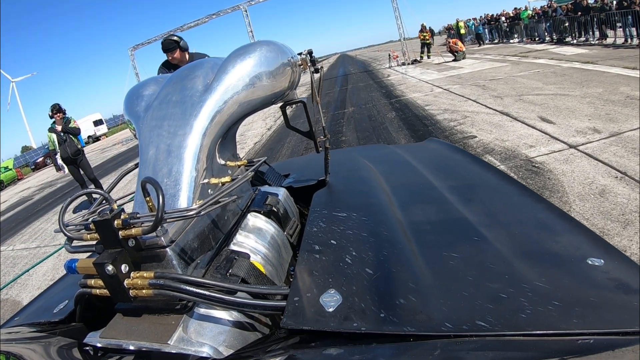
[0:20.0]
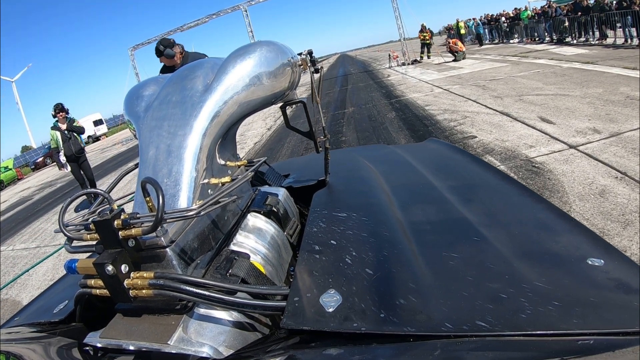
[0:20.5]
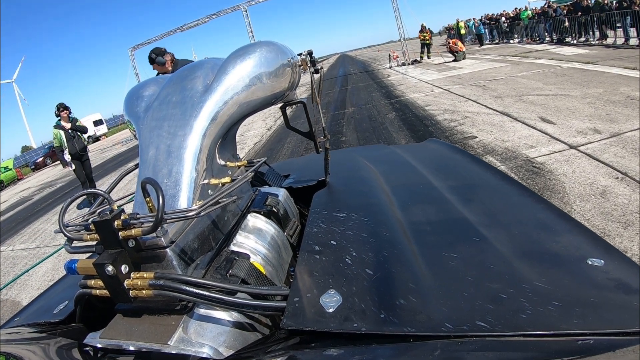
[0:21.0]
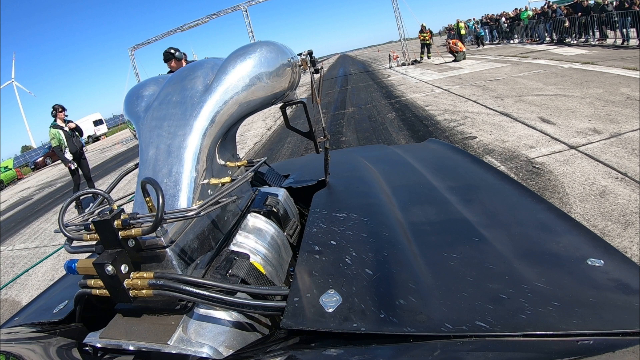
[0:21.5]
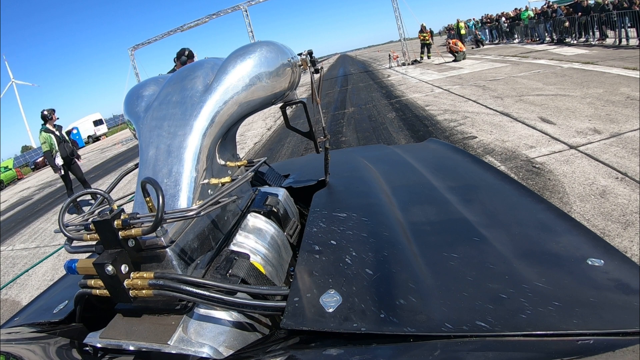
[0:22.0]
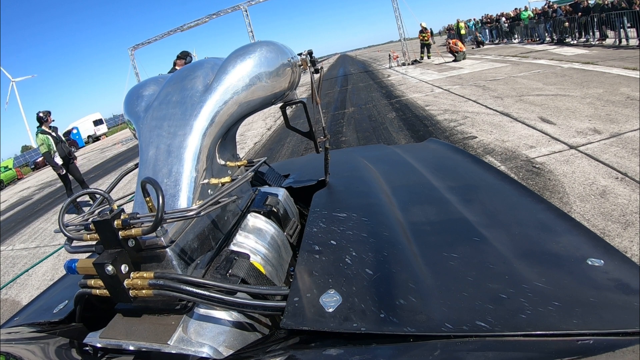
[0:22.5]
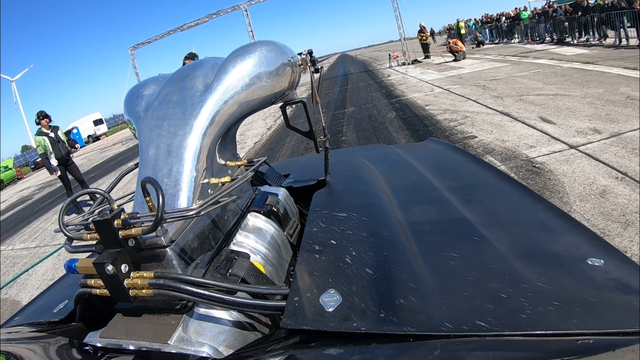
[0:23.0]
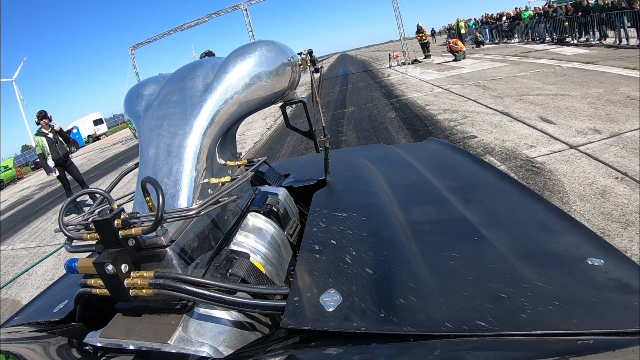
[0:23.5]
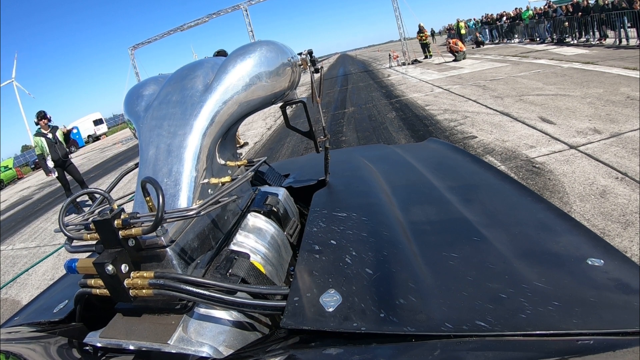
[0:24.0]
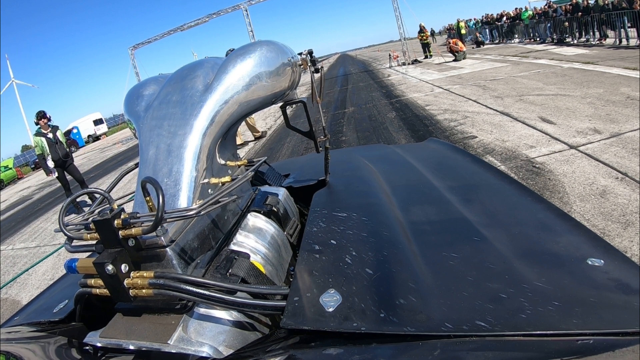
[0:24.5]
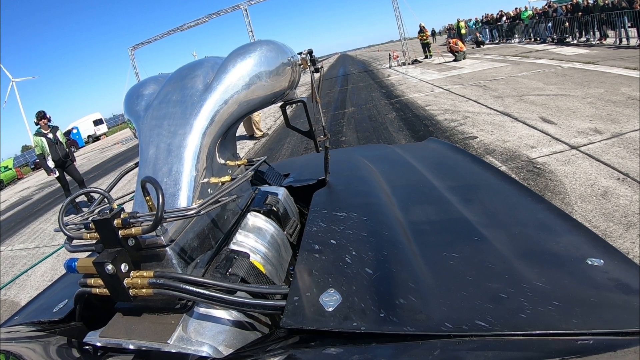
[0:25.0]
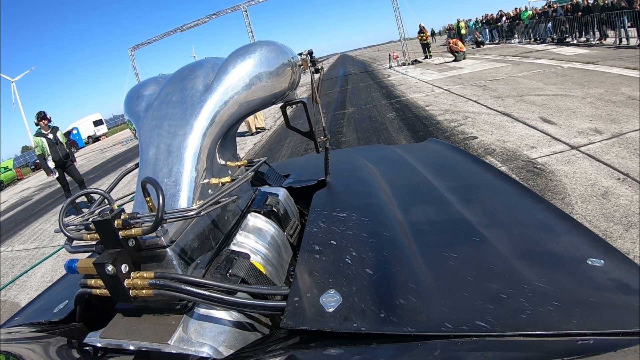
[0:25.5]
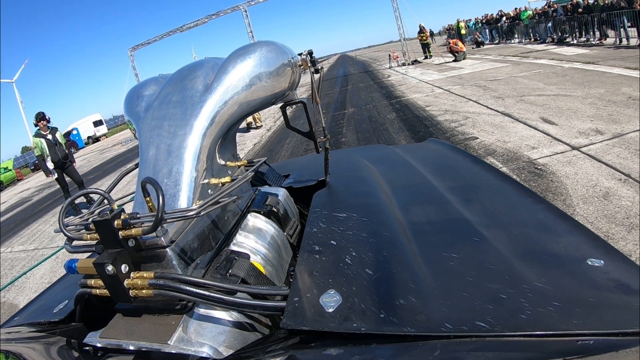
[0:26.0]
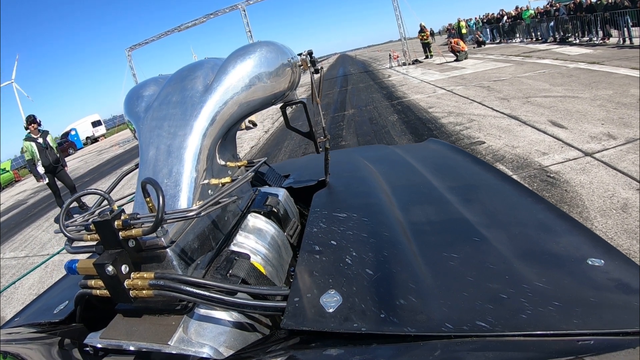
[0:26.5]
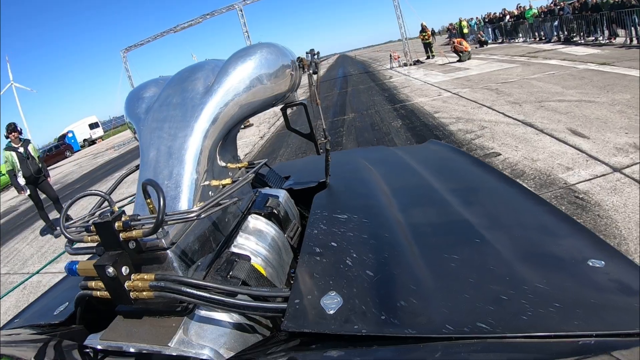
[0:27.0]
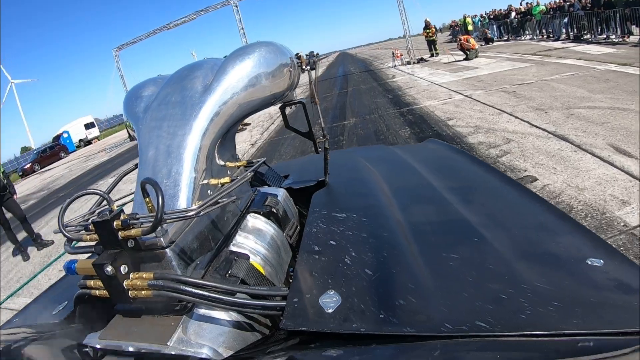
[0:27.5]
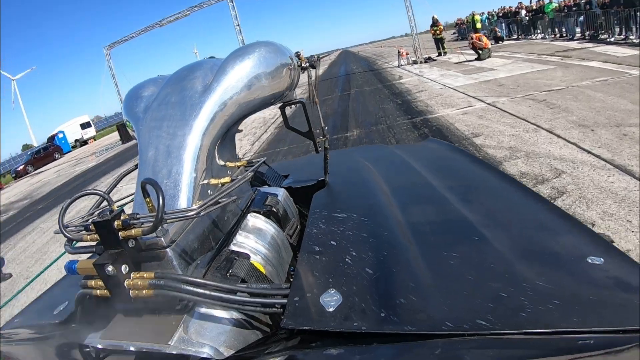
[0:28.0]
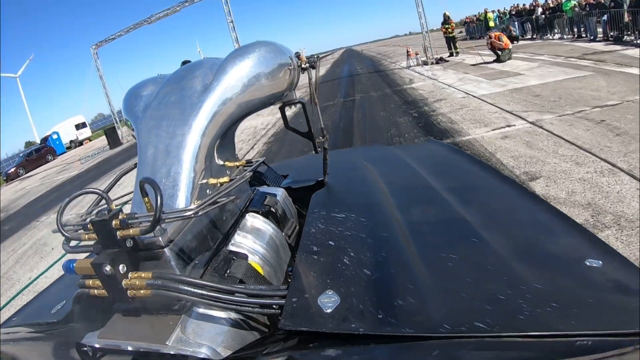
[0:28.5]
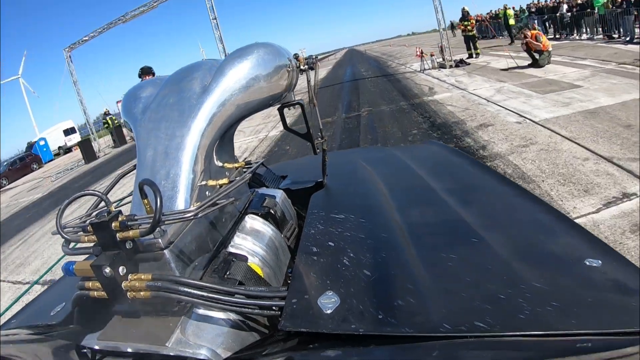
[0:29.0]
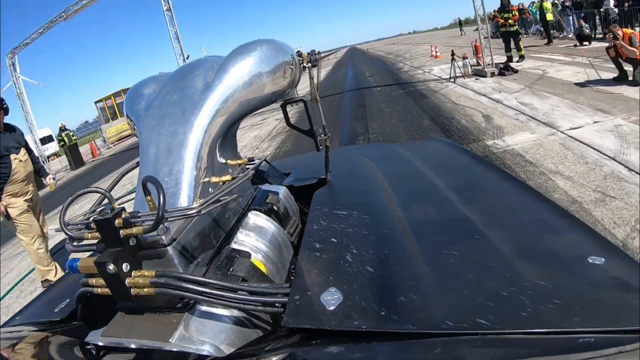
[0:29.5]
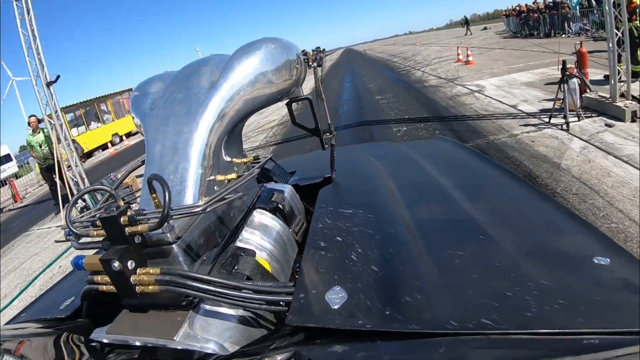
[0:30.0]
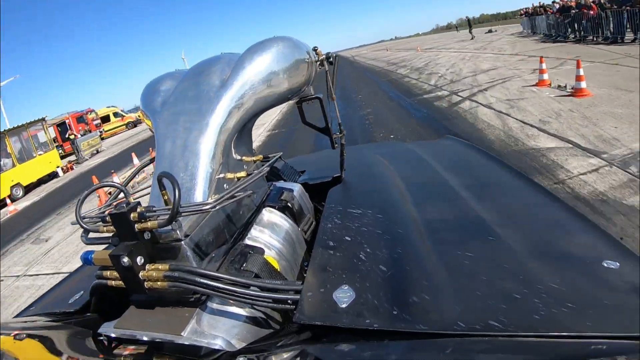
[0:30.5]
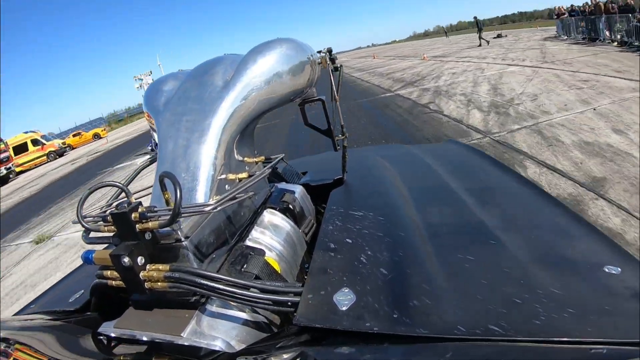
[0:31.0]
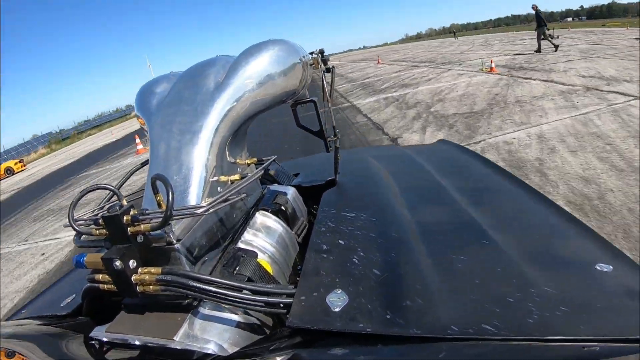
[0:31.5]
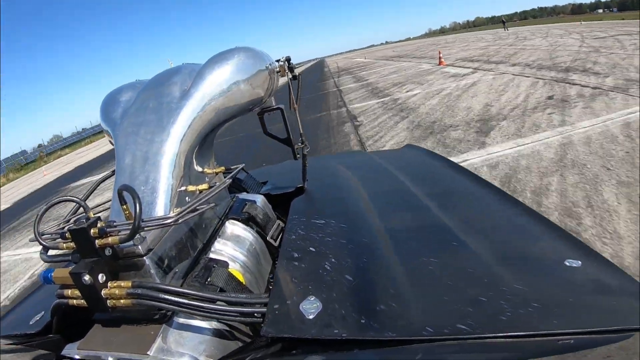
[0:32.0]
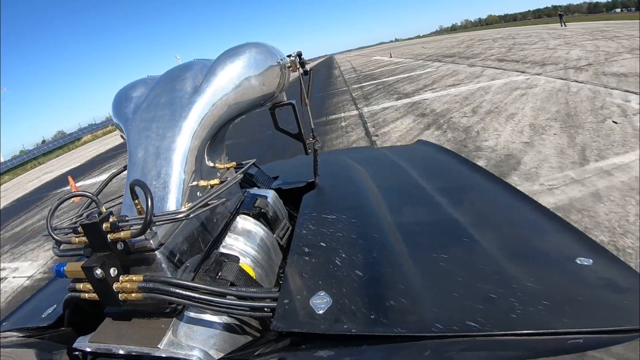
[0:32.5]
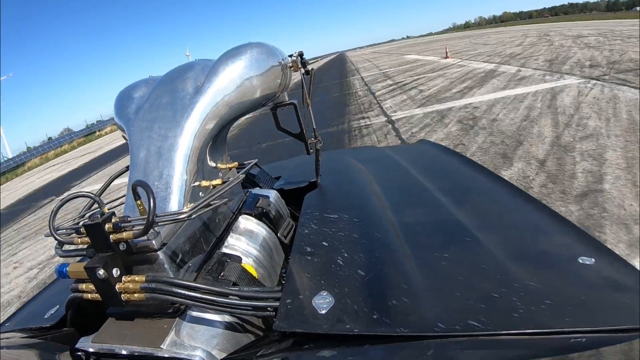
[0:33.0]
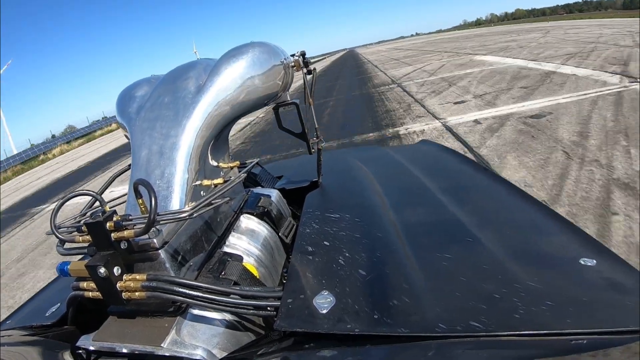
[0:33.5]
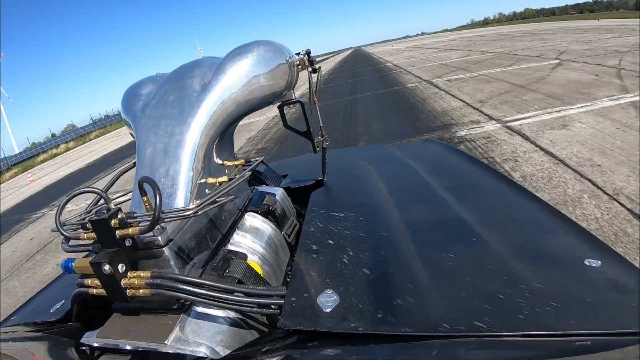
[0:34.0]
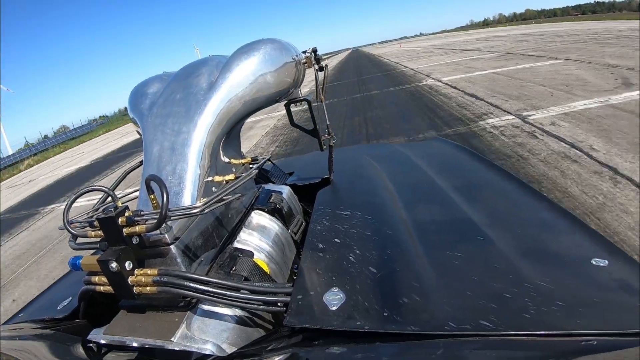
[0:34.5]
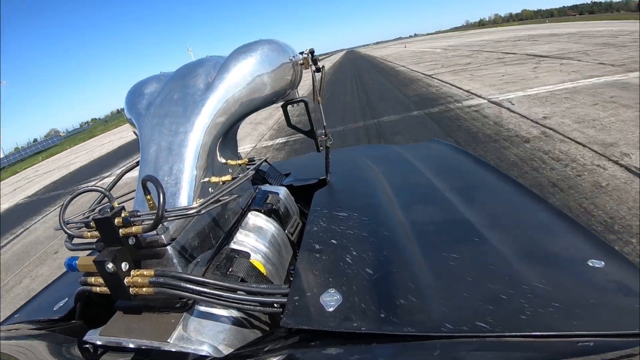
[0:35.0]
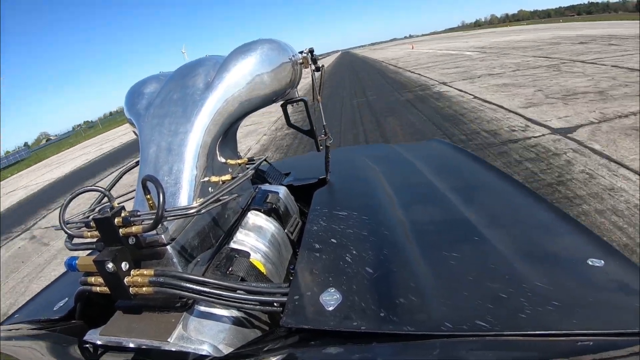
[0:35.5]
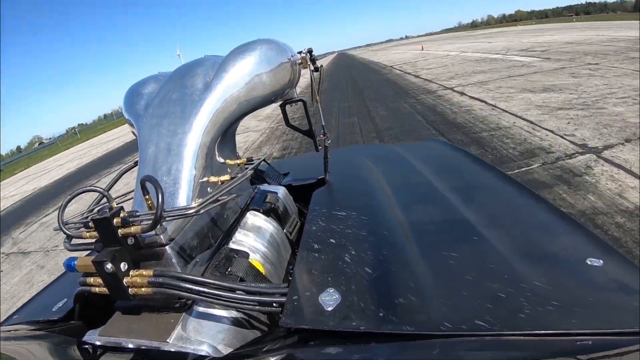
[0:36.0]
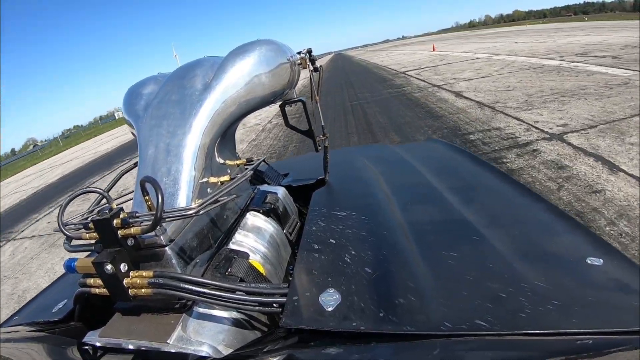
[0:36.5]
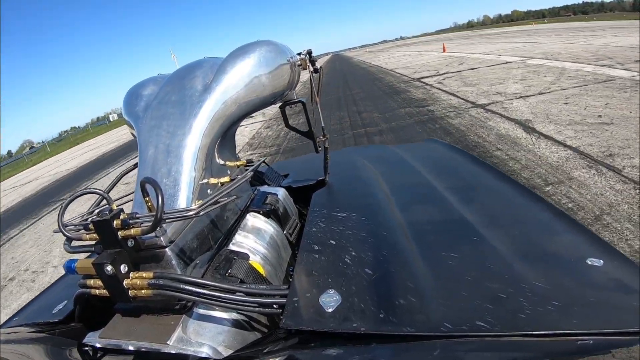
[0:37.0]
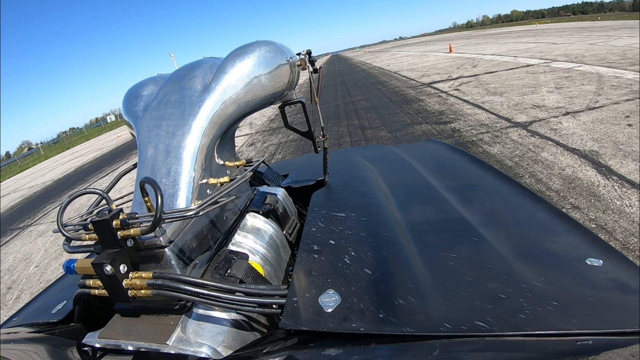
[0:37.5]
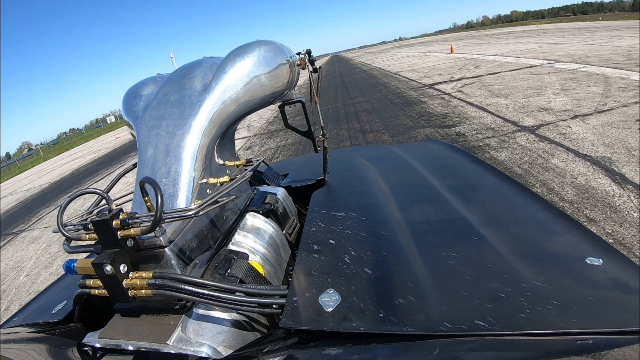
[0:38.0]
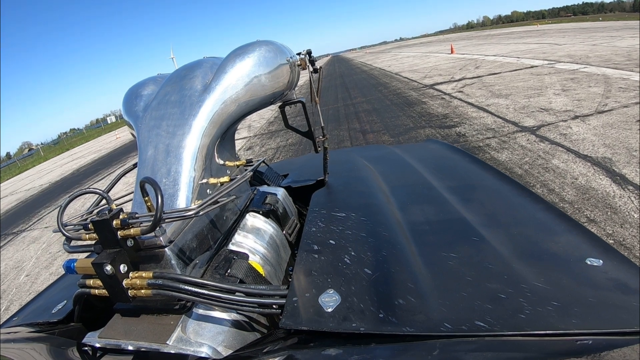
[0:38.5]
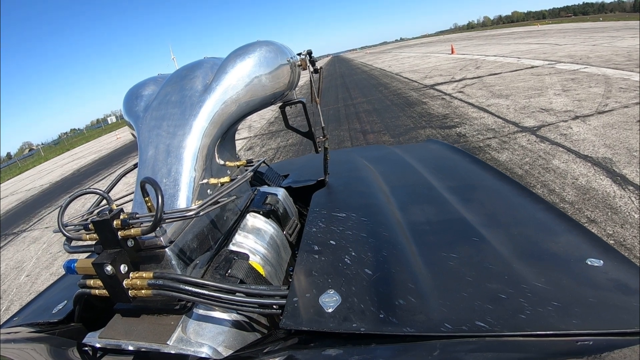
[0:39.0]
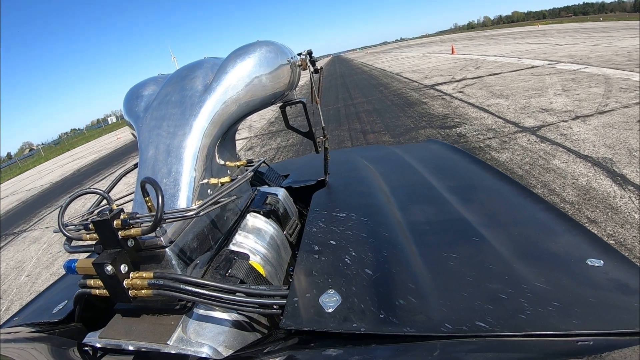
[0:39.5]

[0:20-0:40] A grey drag racing car with an engine on its hood drives toward a start line. Men around the car wear something covering their ears, probably for the sound, and a crowd is on the right-hand side of the drag racing course. The car then races down the strip very fast, with trees off to the right and left of the cement strip. While it drives, a little steam comes out of the hood, and the car jerks around a little on the cement strip before coming to a complete stop. Several men are around the car, all wearing jackets and head gear. The crowd stands close to the strip.